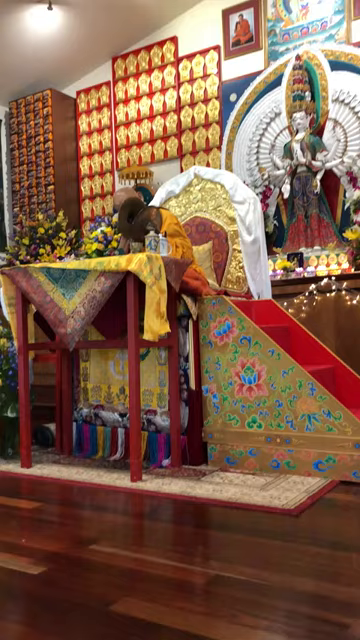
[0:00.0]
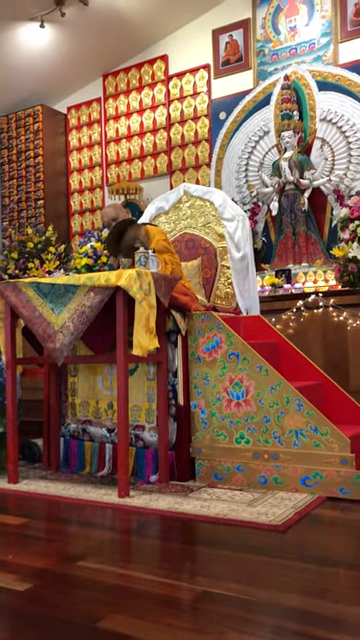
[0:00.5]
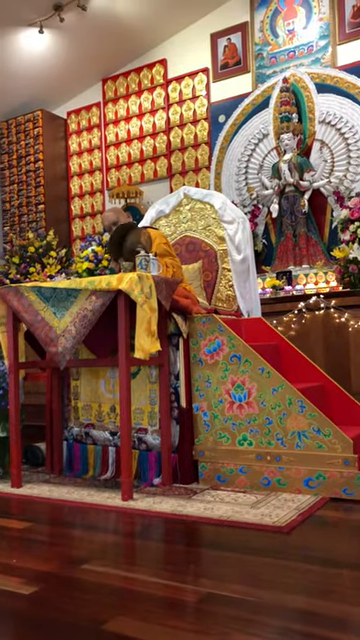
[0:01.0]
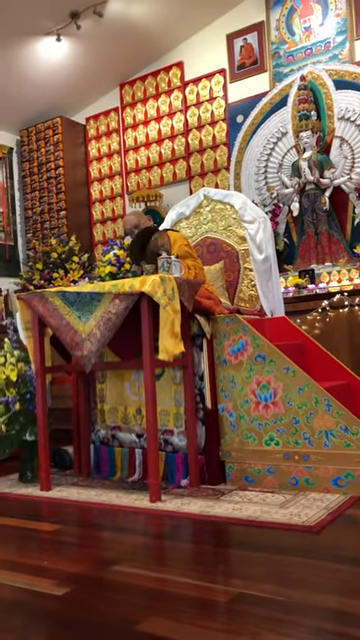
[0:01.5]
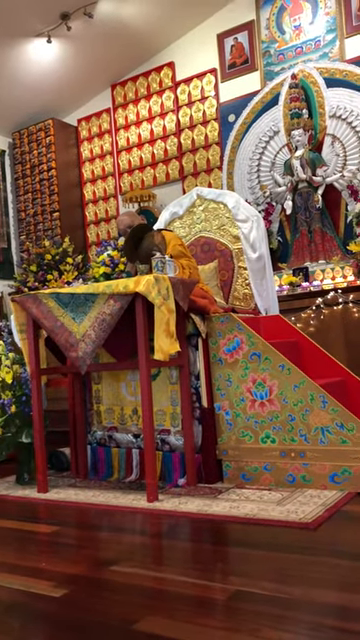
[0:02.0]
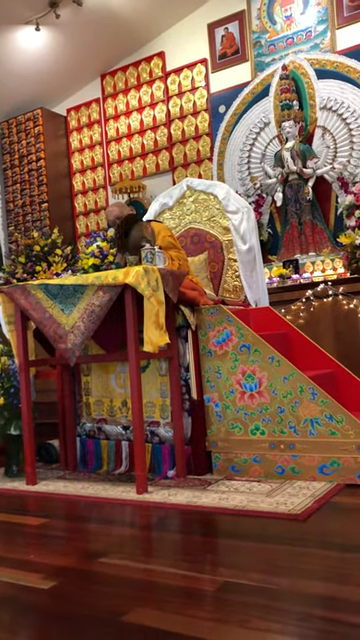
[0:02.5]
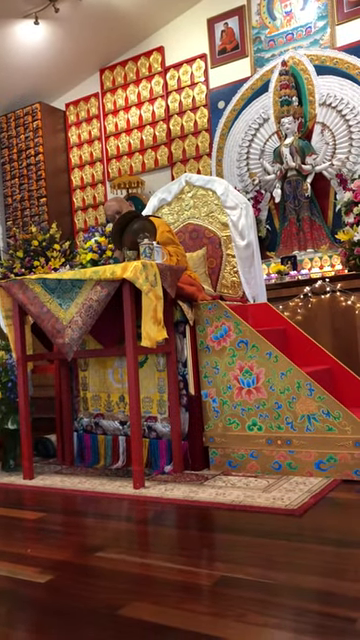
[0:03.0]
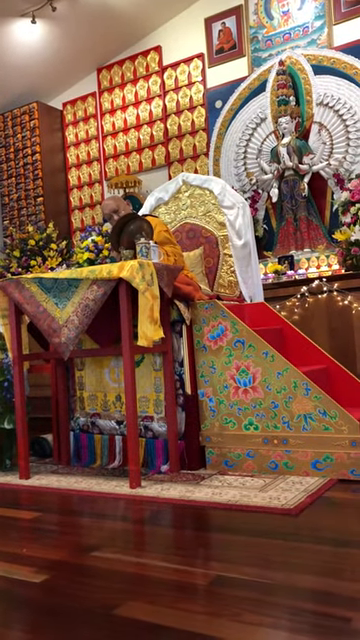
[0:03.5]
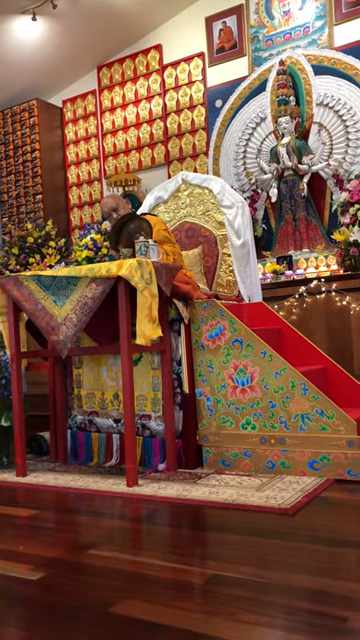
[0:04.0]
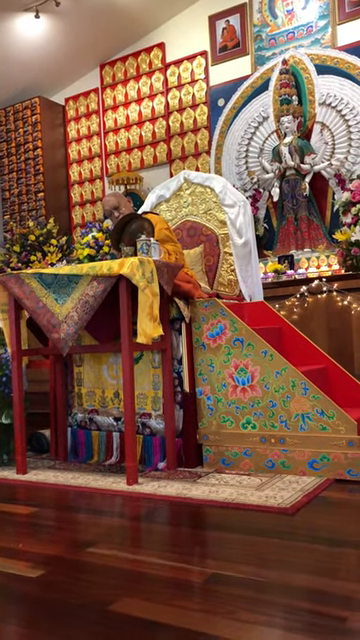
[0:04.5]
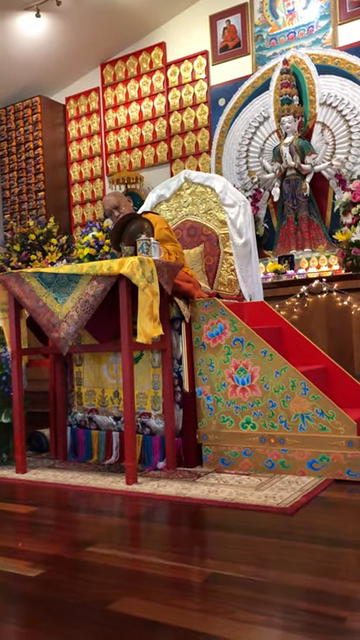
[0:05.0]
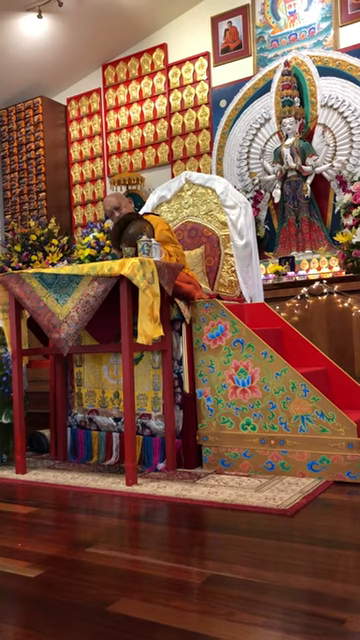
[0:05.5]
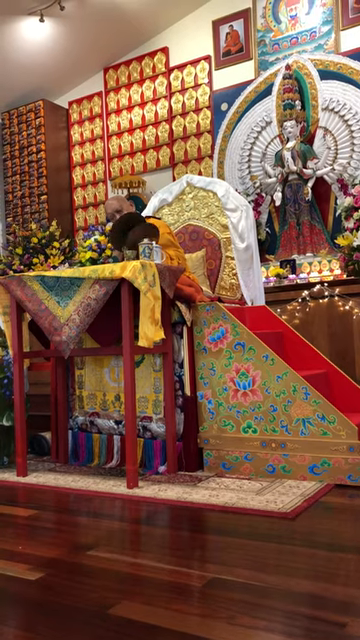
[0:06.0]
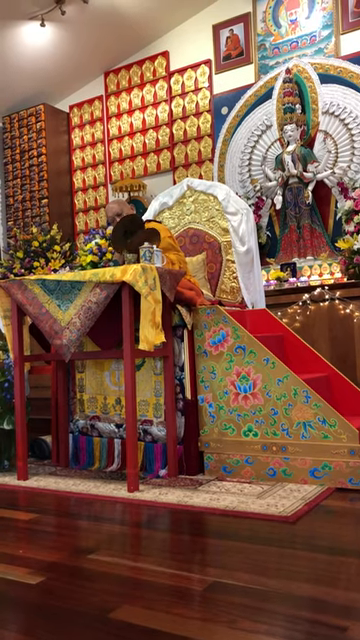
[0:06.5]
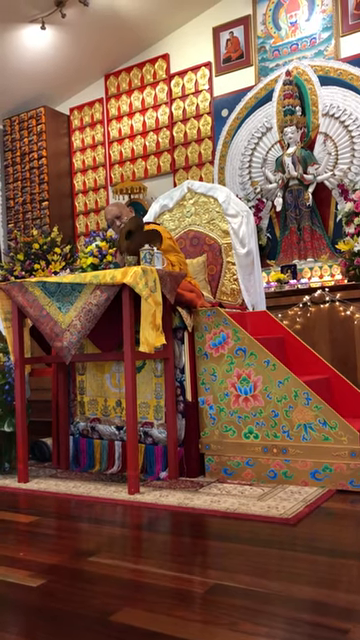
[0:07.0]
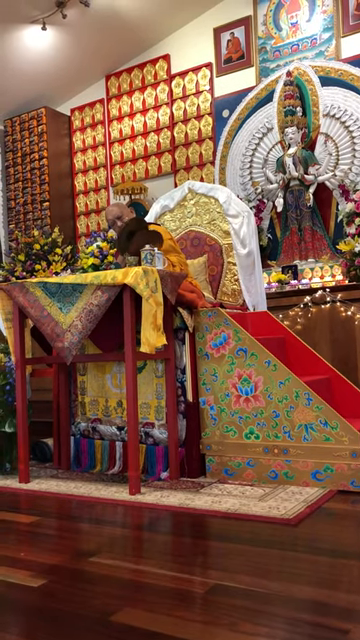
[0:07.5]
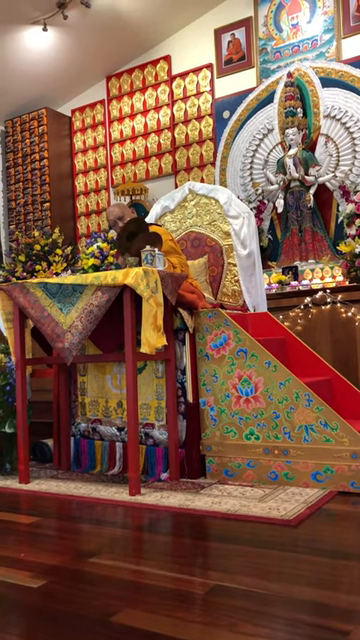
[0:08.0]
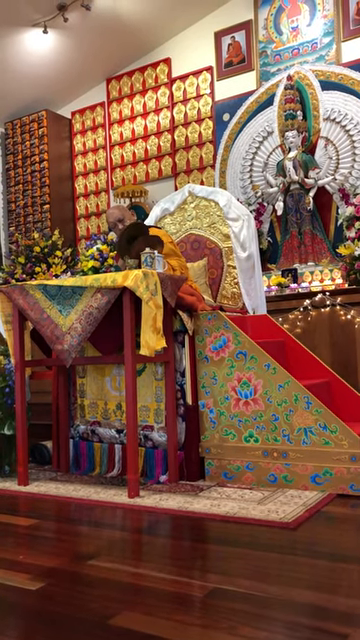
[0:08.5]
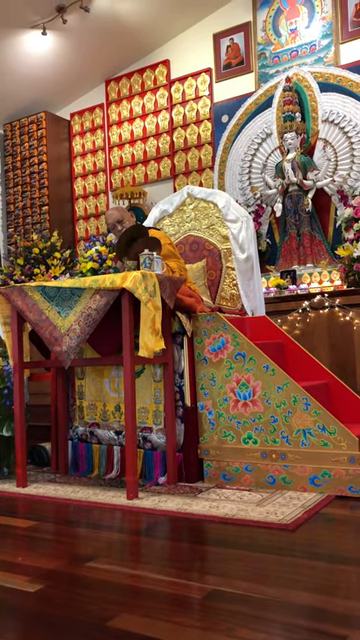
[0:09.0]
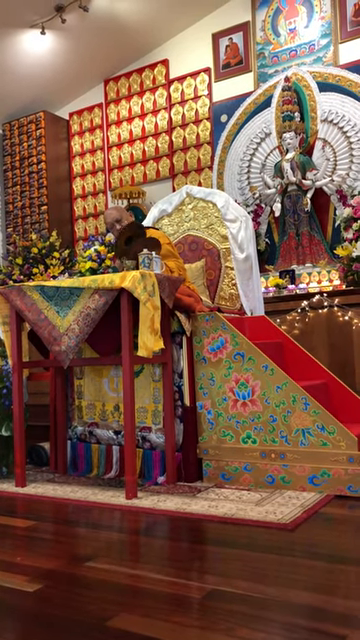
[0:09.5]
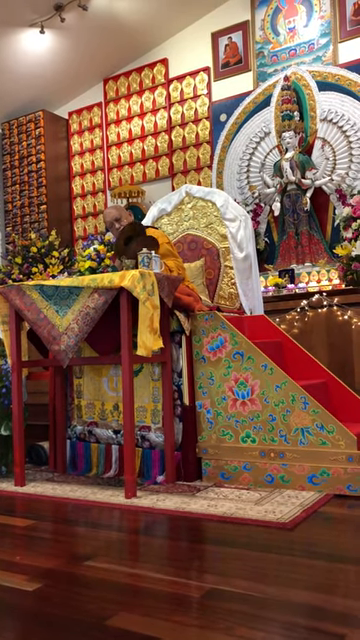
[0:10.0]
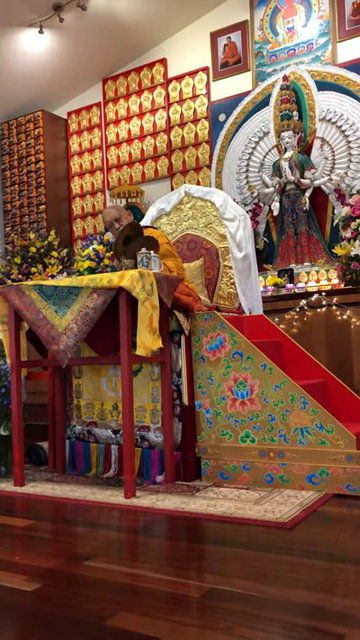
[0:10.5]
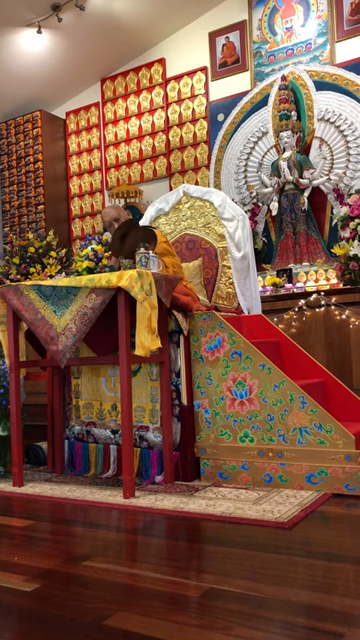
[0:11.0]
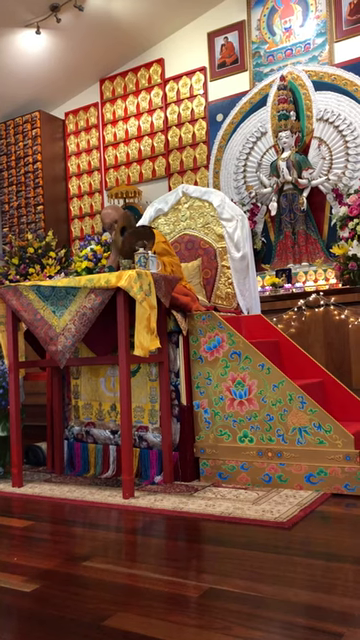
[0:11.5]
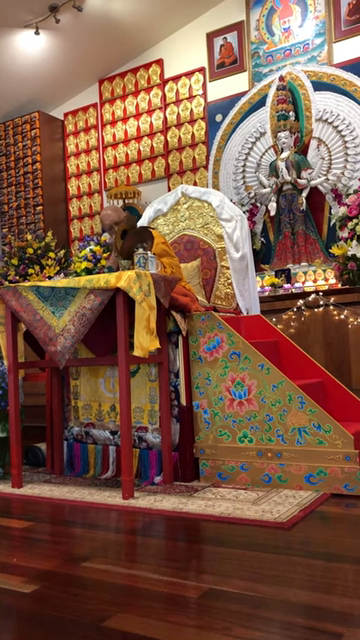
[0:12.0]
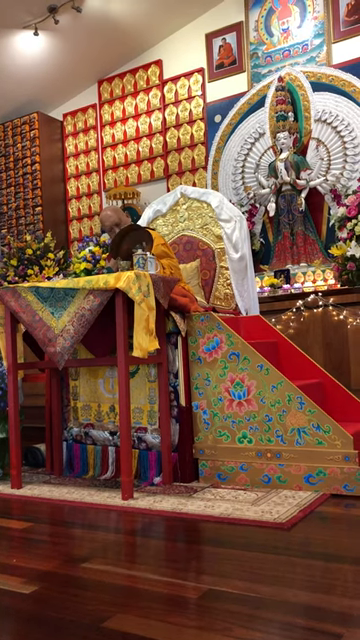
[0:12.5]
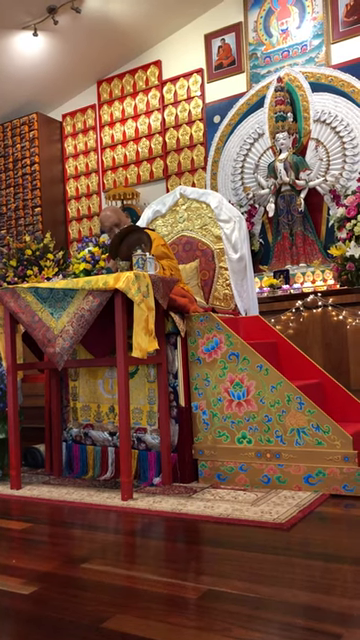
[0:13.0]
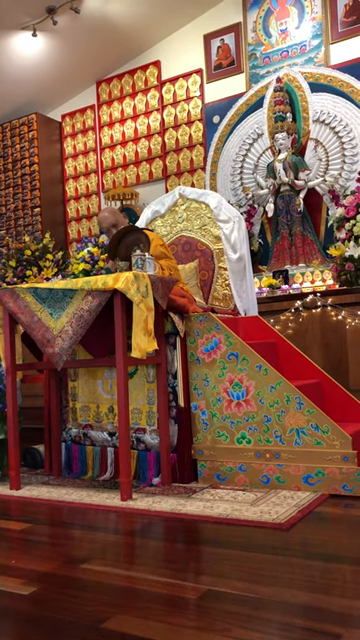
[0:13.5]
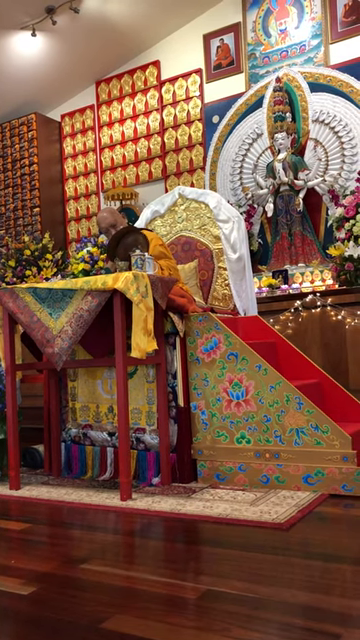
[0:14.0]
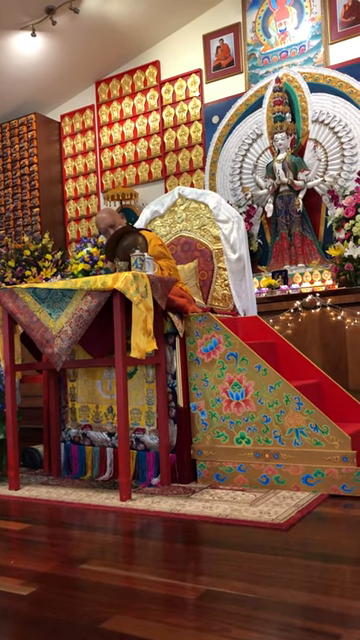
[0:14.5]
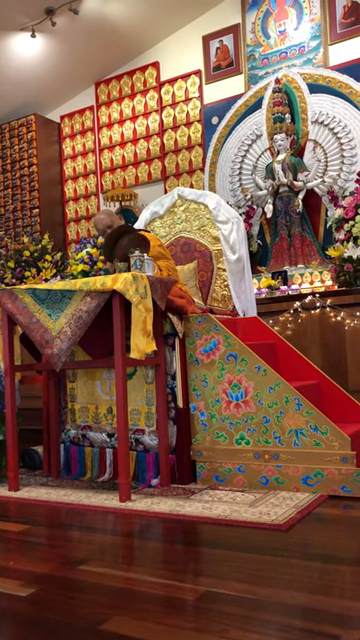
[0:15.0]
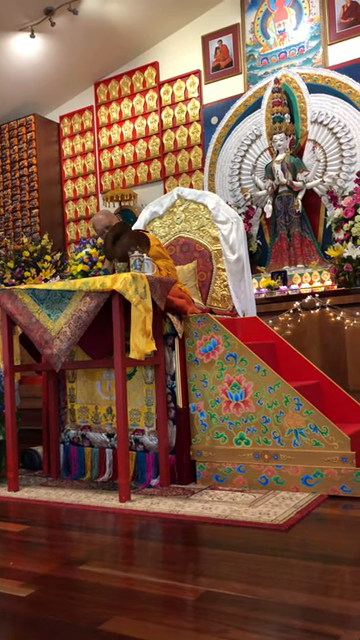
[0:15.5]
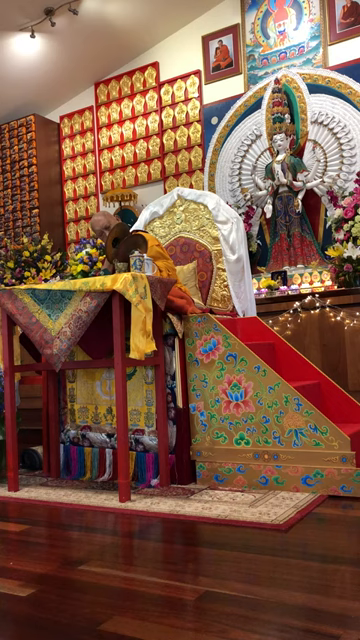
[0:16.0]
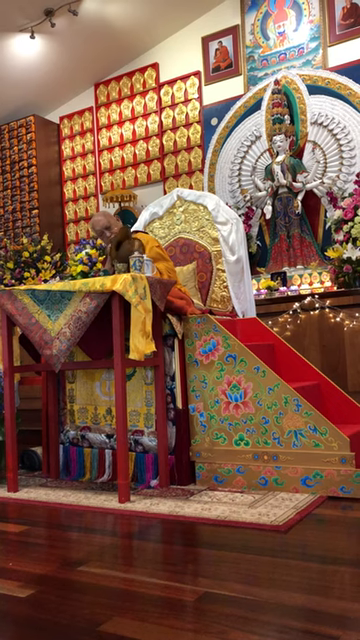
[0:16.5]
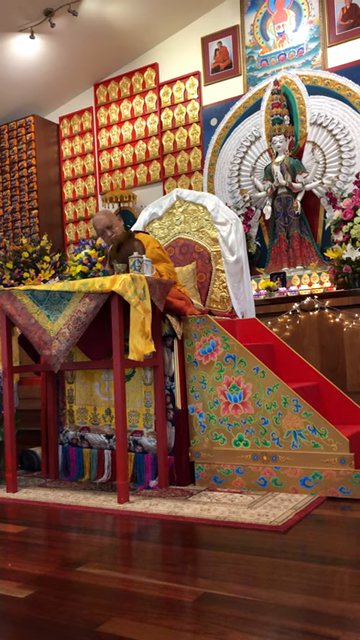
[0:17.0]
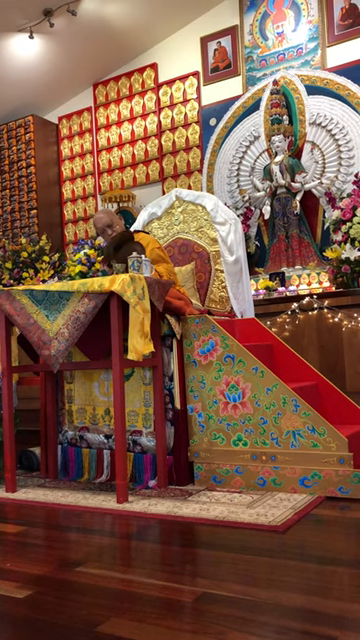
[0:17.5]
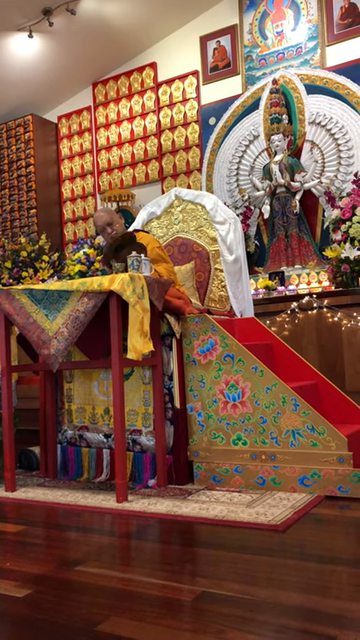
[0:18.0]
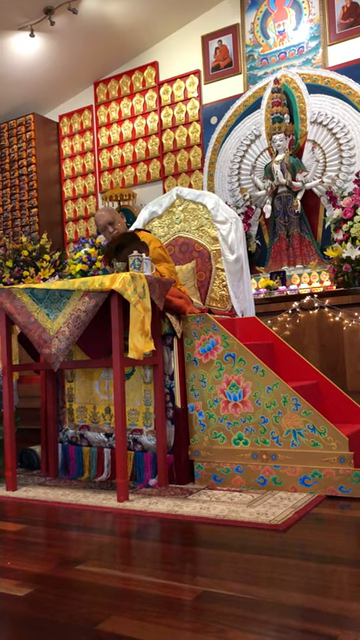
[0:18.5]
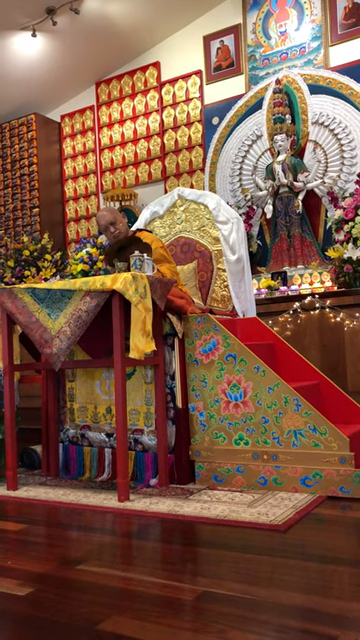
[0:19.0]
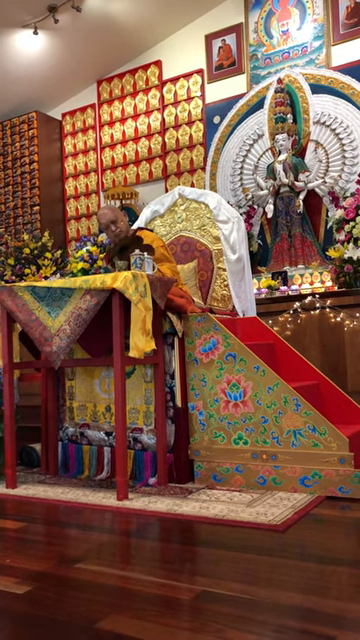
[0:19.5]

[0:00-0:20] The setting is possibly religious, maybe Buddhist. A man is sat on a kind of golden, ornate throne, with a set of wooden steps that have flowers painted on the side for him to get up onto the throne. Behind him is a kind of religious icon, and there appear to be lots of golden emblems on the wall. In front of him is a tall table with kind of silk drapes and scarves over it. He holds two cymbals and shakes them, watching them as he moves them together. Every now and then he stops and puts the cymbals to his ears, then continues tapping them together very gently. The floor is a very shiny parquet, the ceiling is white, and there are some modern lights. The man is on his own; no other people are on screen.